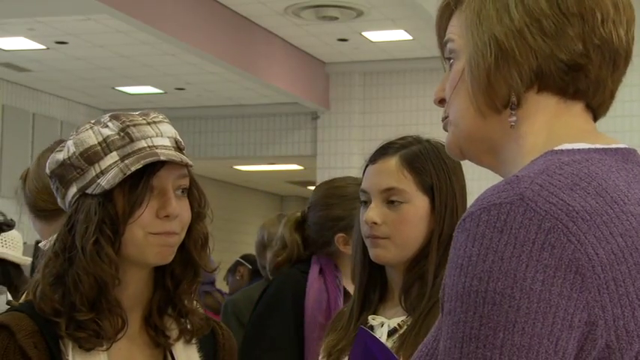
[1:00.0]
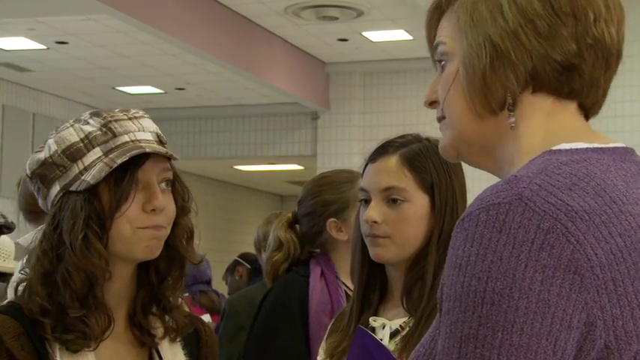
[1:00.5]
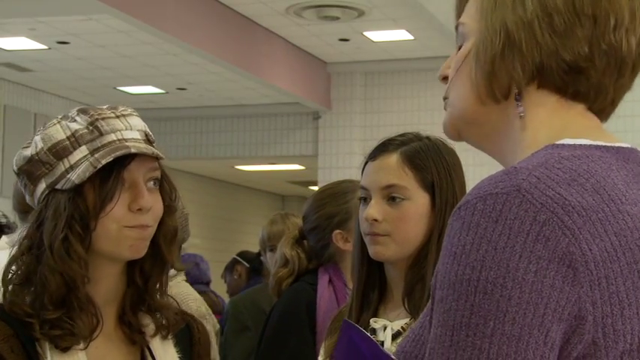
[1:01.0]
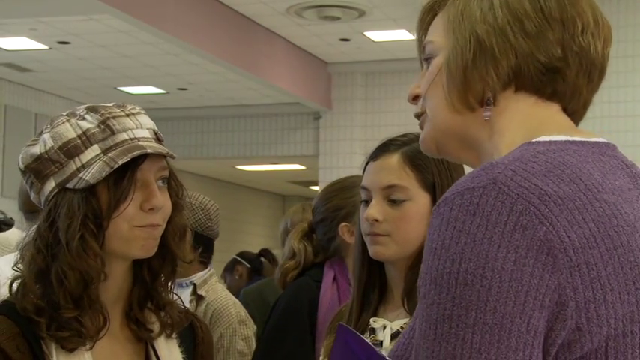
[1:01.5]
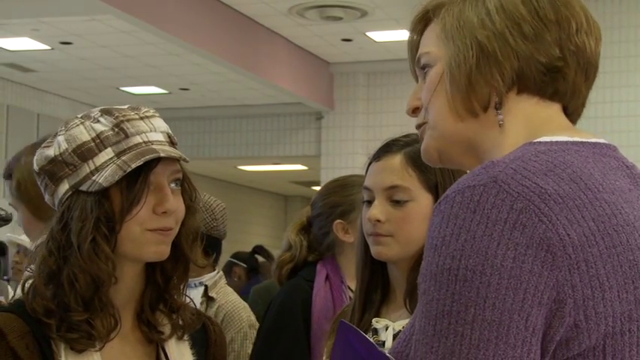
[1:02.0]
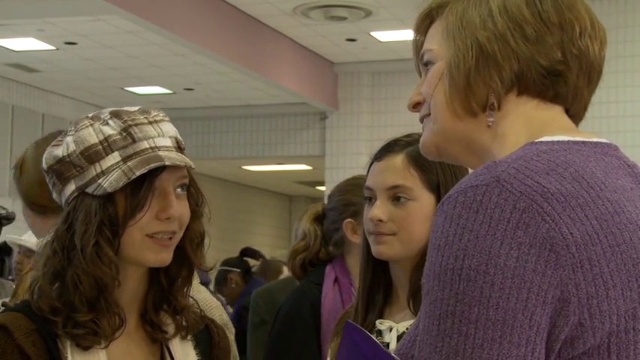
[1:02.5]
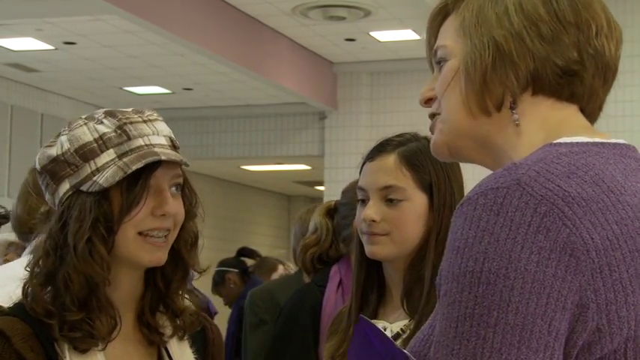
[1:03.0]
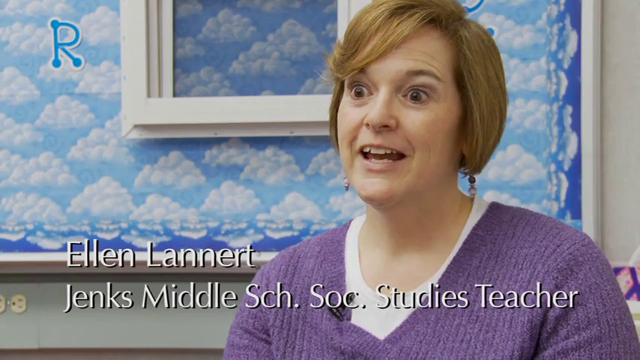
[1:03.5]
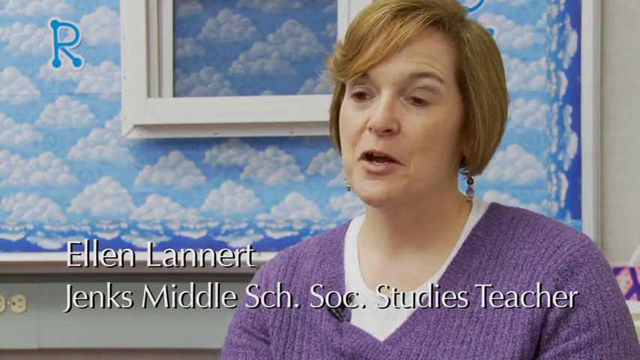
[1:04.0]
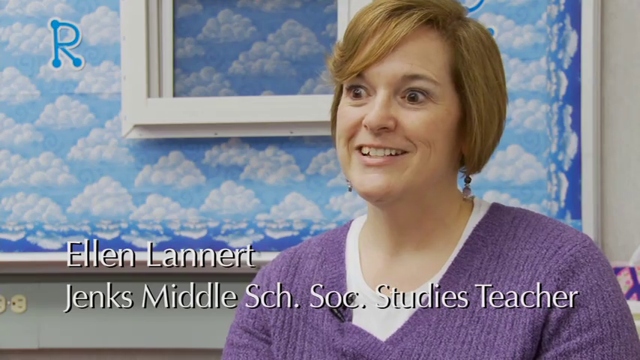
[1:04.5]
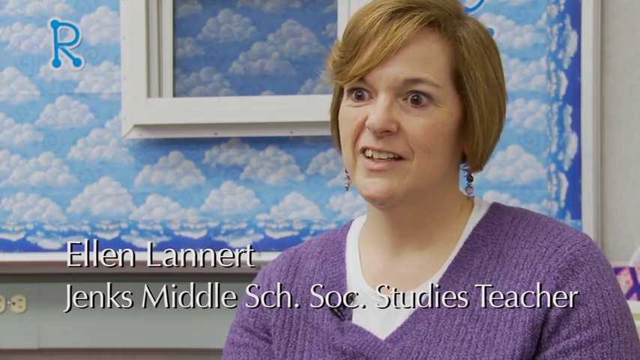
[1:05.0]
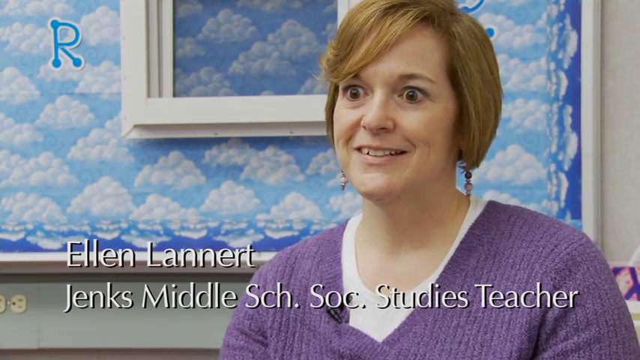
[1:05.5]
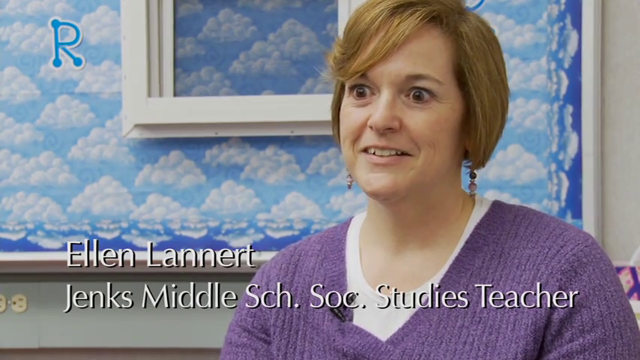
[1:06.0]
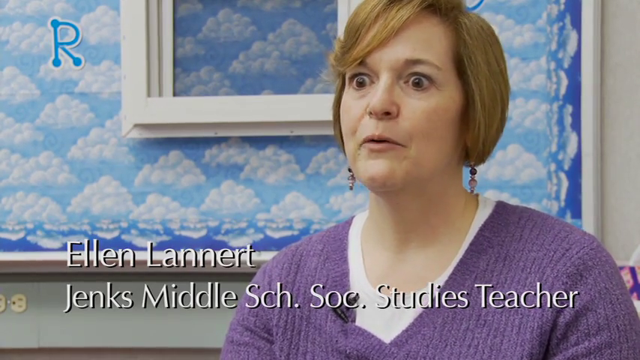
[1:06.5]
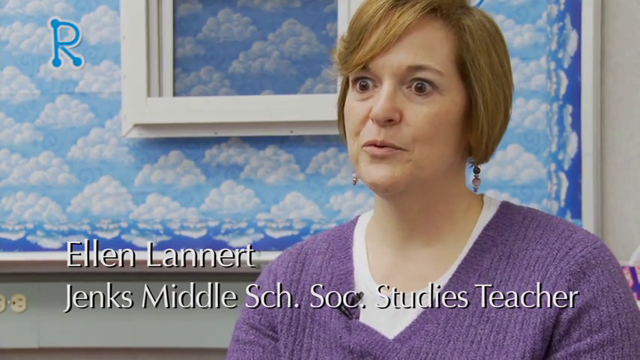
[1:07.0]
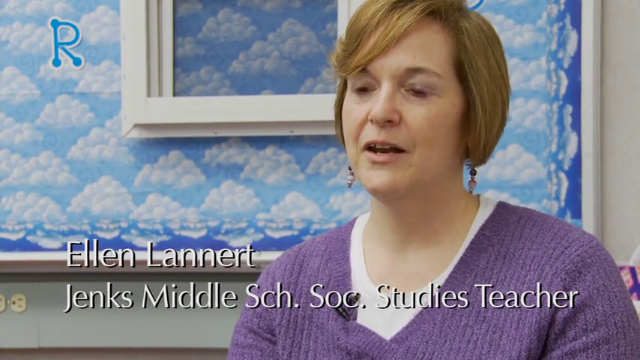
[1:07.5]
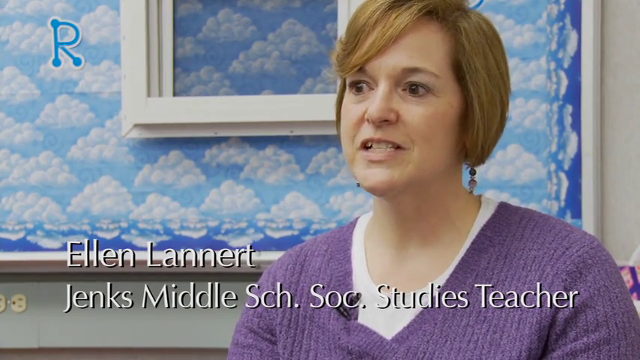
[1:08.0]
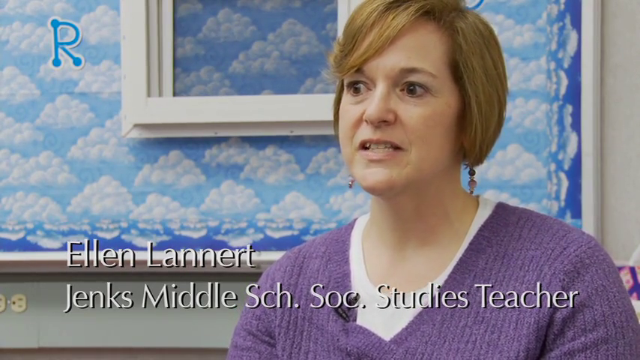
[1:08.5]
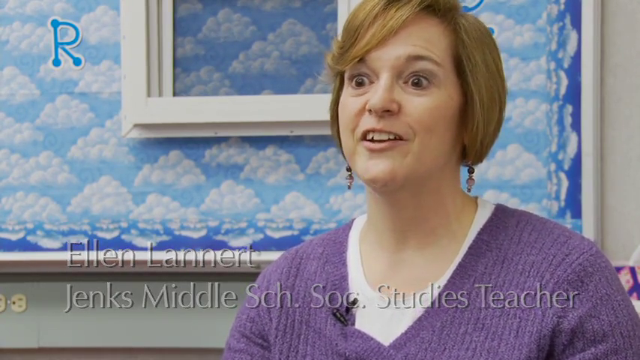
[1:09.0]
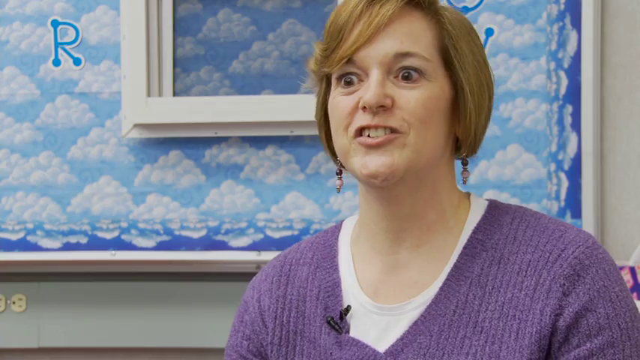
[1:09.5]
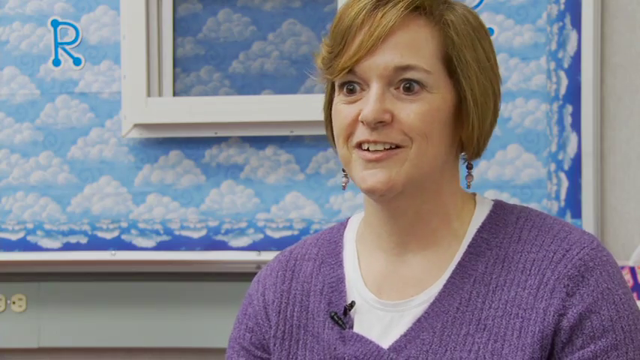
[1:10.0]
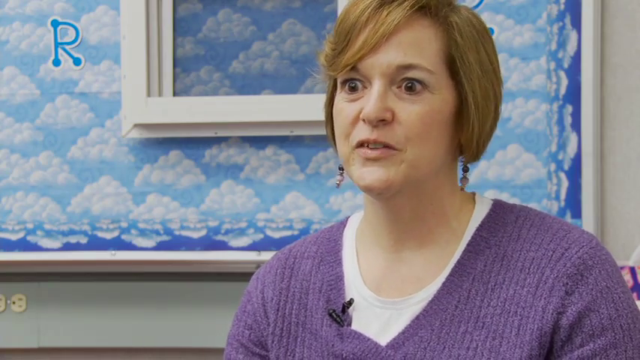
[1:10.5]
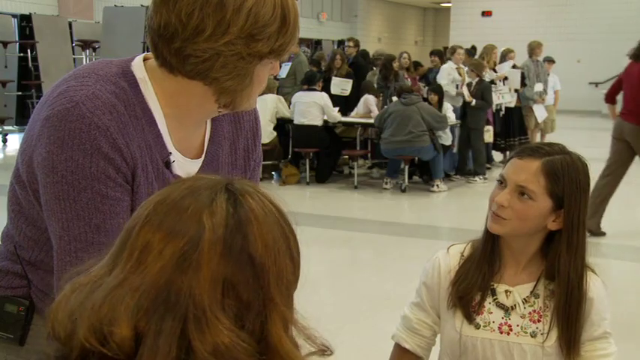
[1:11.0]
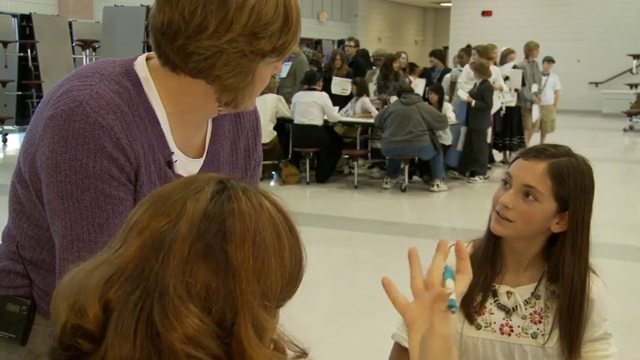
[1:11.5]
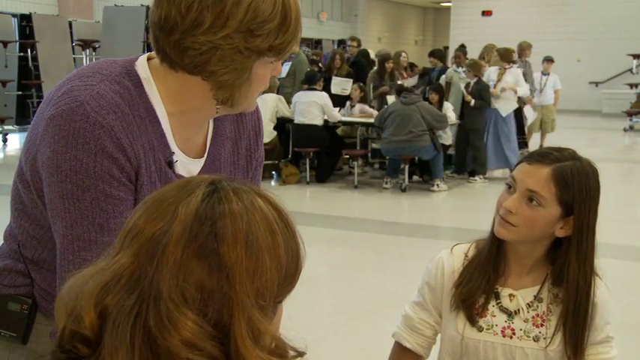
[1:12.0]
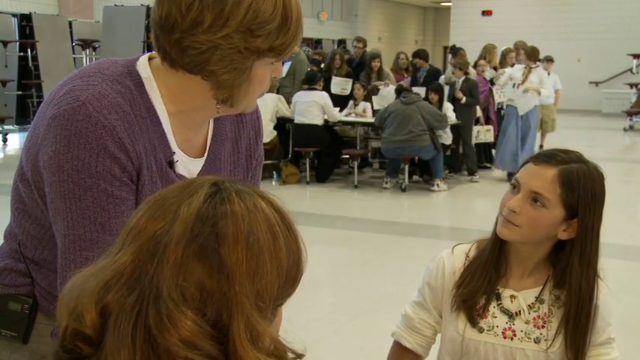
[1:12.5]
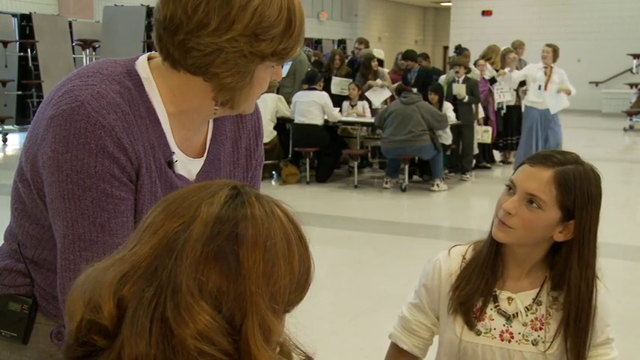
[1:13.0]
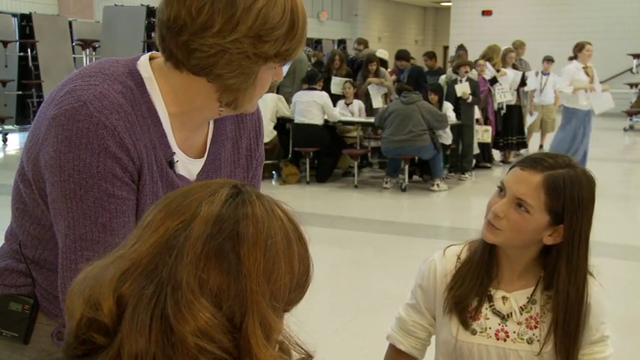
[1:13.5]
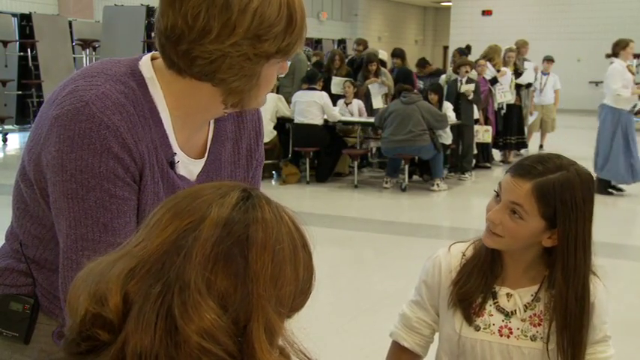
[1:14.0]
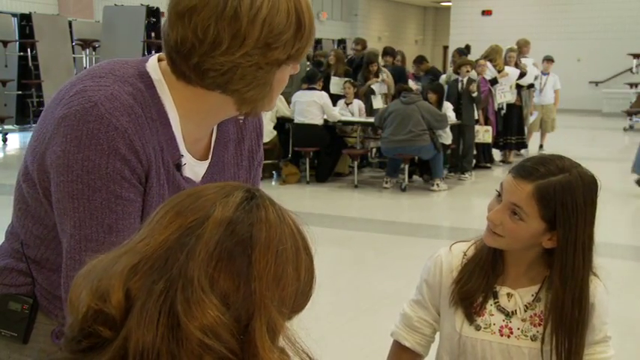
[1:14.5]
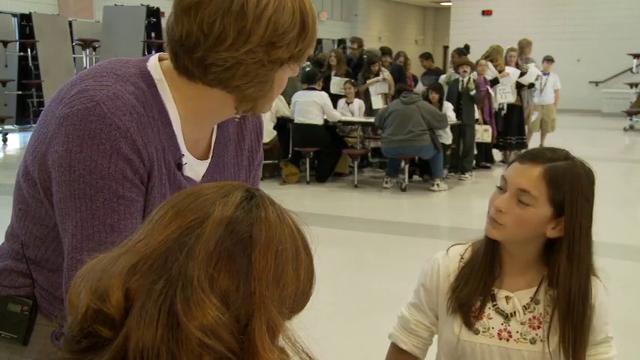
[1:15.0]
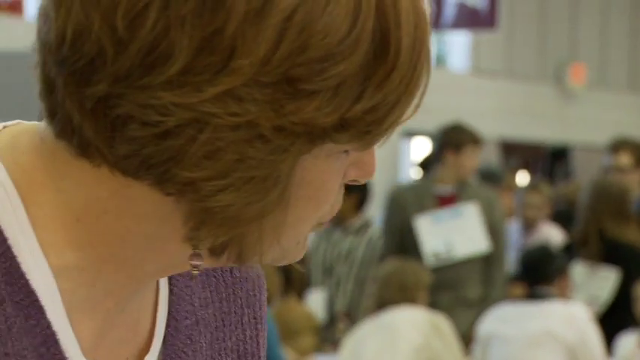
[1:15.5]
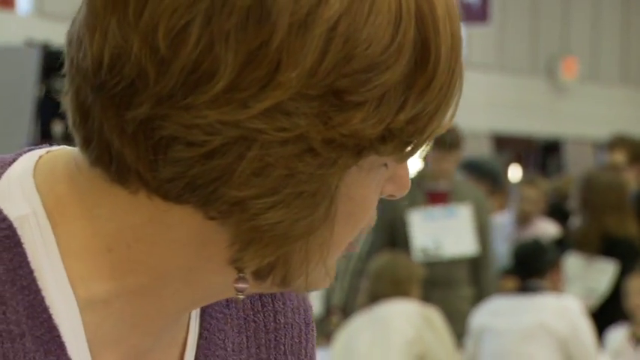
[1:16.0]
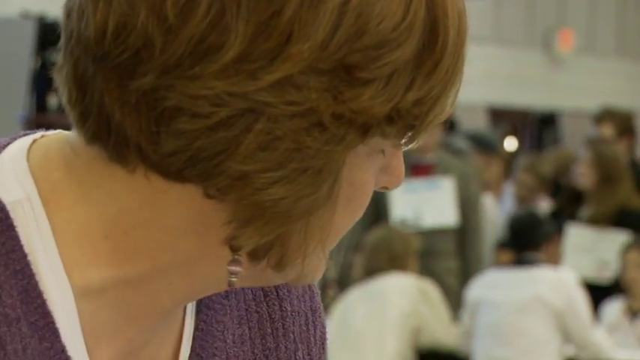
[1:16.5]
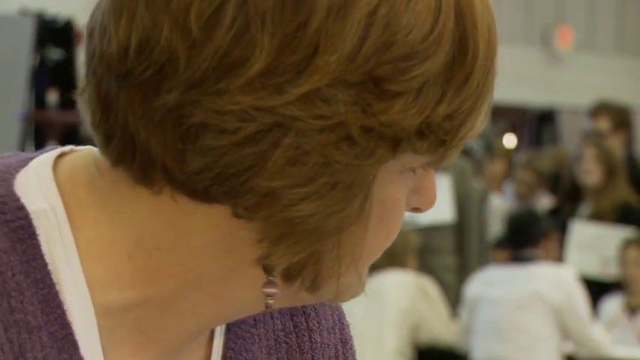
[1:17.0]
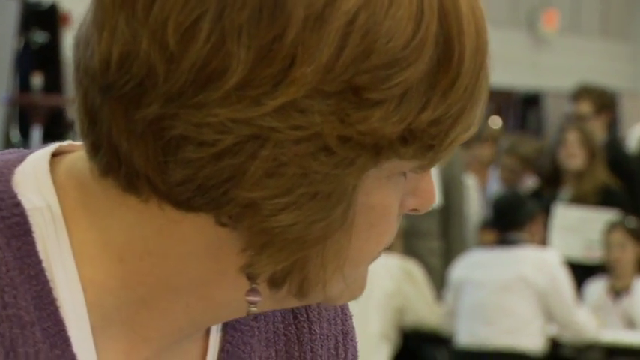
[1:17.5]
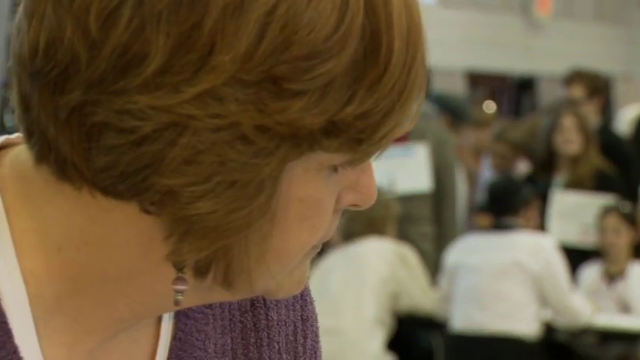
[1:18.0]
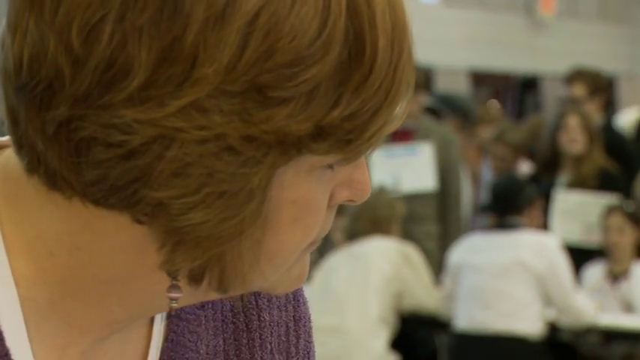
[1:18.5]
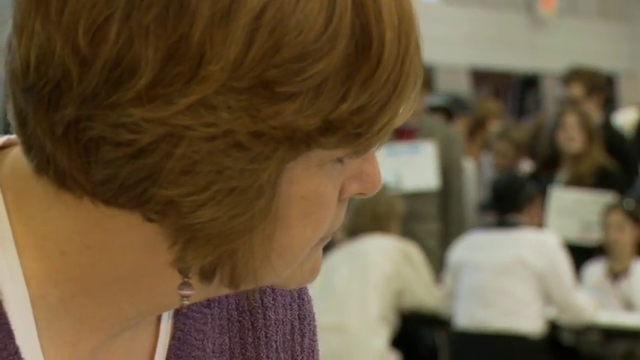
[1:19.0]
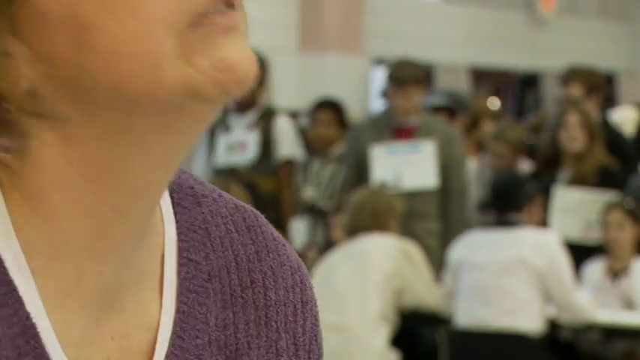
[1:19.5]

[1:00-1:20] The woman in purple is Ellen Lannert, a Jenks Middle School Social Studies teacher. The event looks like some sort of demonstration or fair with many people, and the footage might be an interview or news coverage of what is probably an immigration social studies project. Ms. Lannert is on screen for much of the time, and she talks to two young girls, maybe in their early teens. In the background, more kids sit at a table wearing placards around their necks; they may be dressed up to represent the countries they are supposed to have immigrated from.